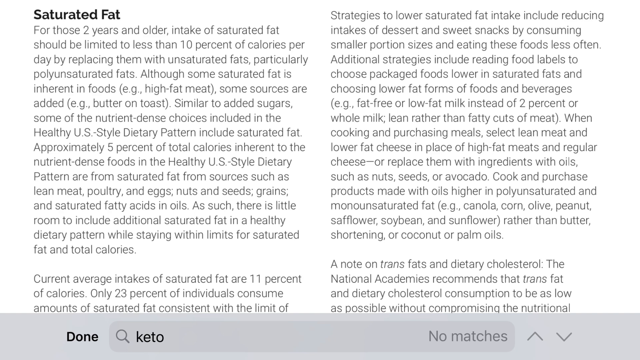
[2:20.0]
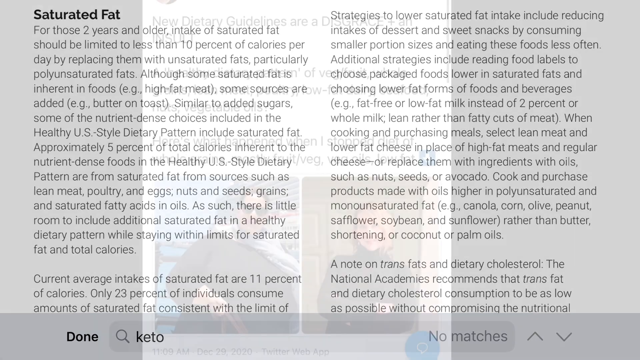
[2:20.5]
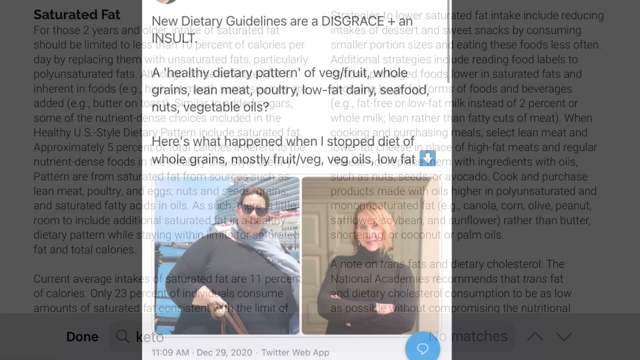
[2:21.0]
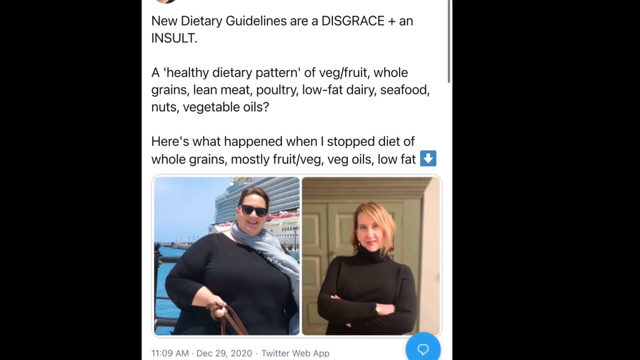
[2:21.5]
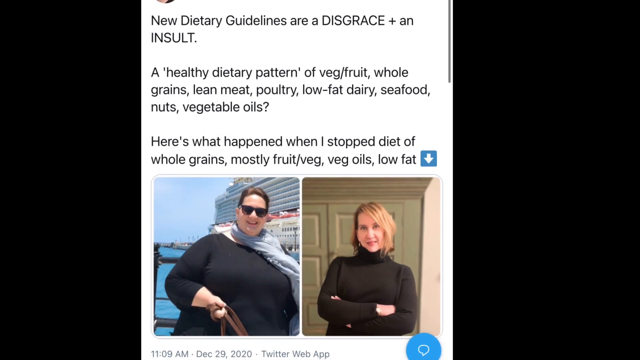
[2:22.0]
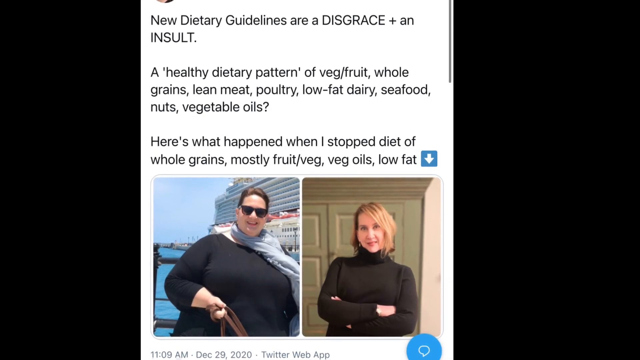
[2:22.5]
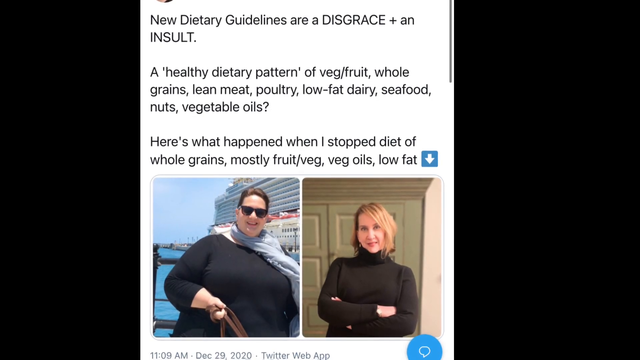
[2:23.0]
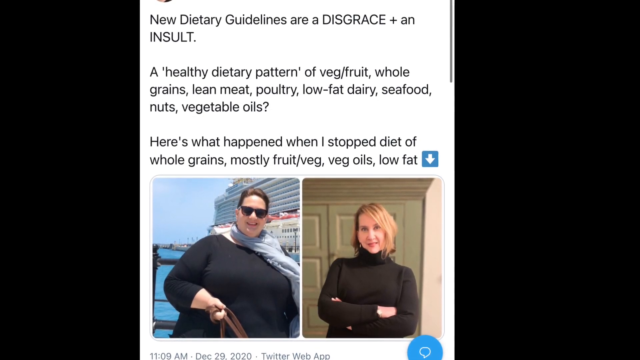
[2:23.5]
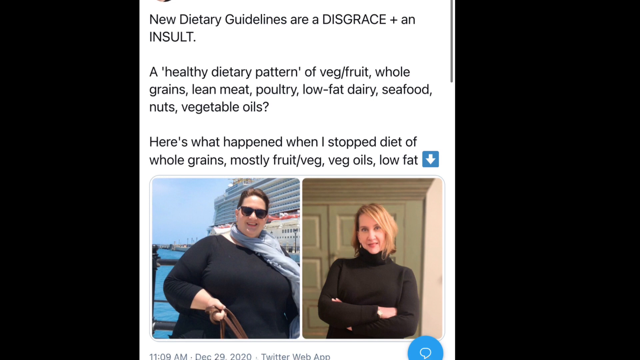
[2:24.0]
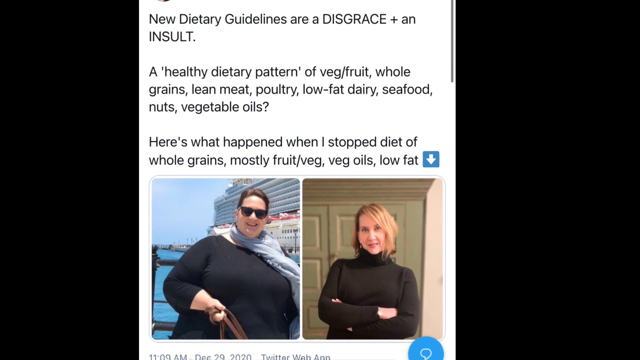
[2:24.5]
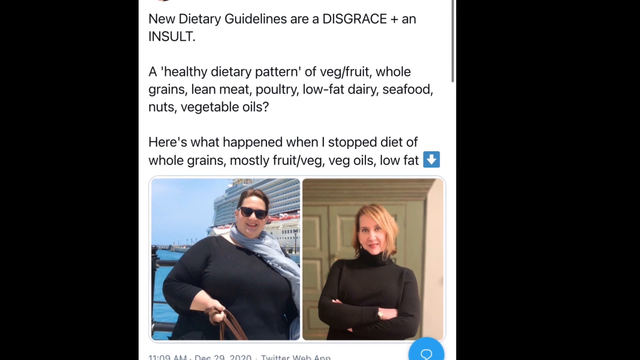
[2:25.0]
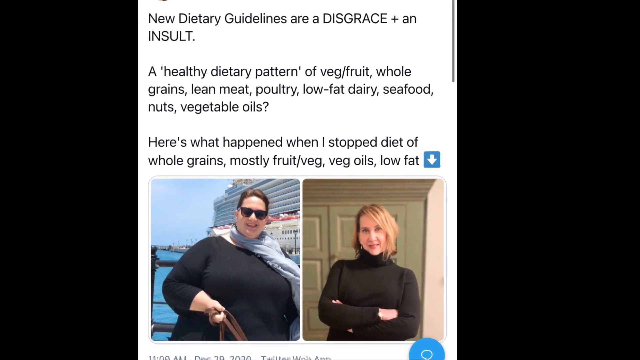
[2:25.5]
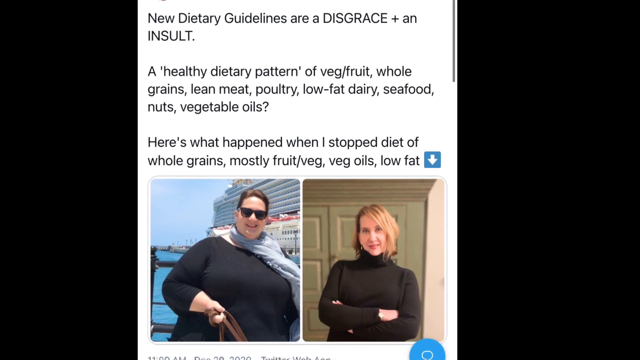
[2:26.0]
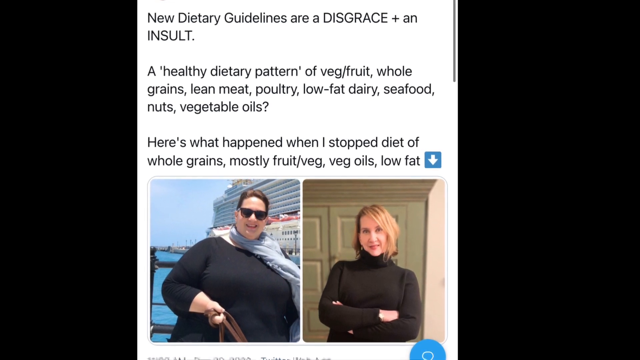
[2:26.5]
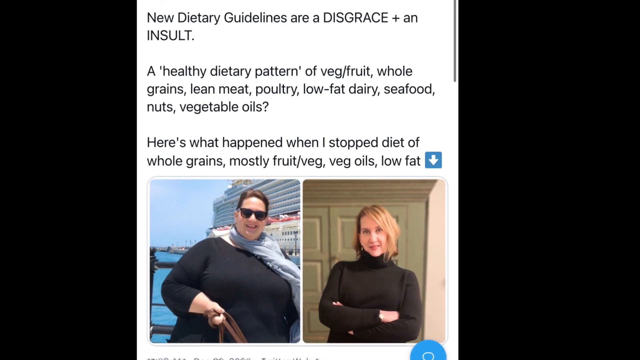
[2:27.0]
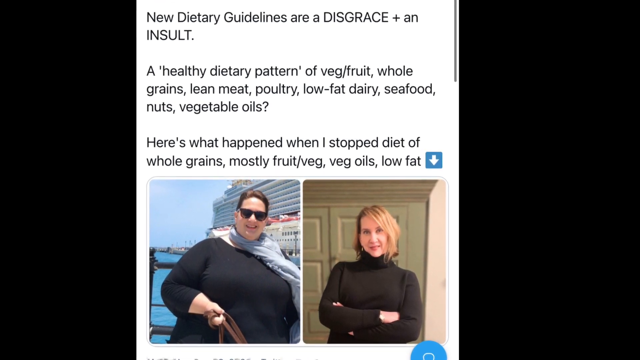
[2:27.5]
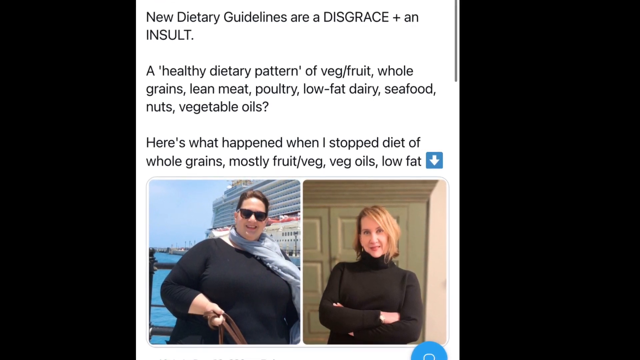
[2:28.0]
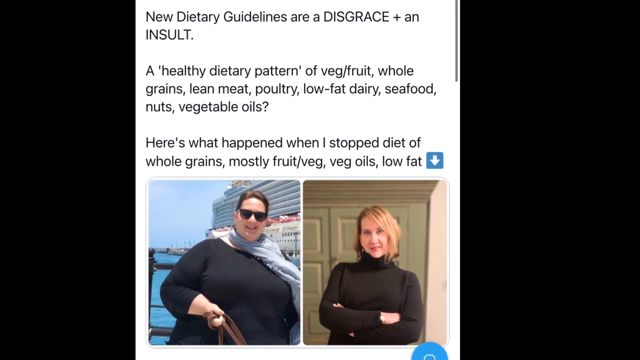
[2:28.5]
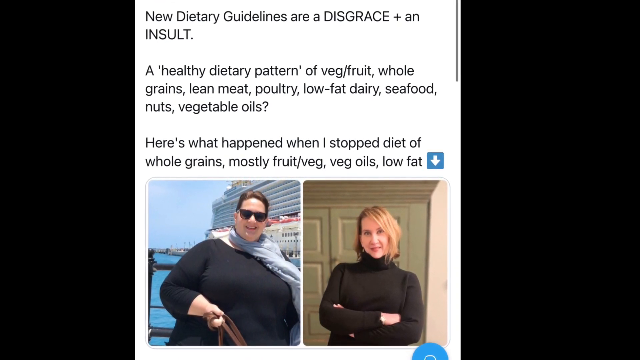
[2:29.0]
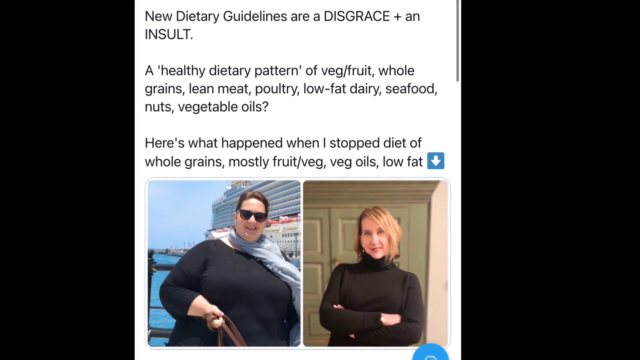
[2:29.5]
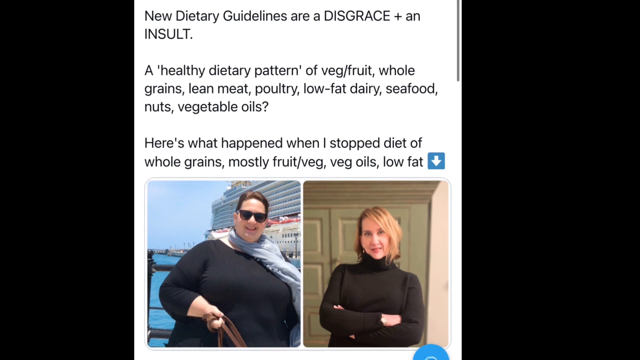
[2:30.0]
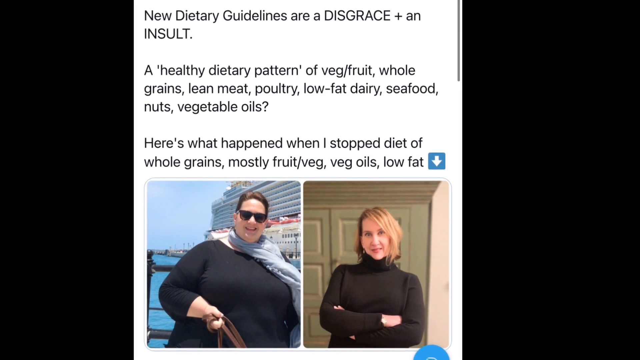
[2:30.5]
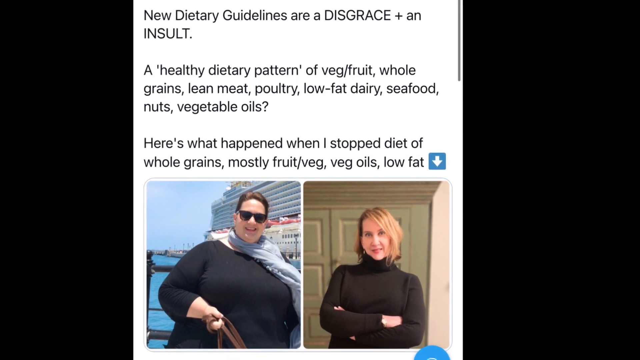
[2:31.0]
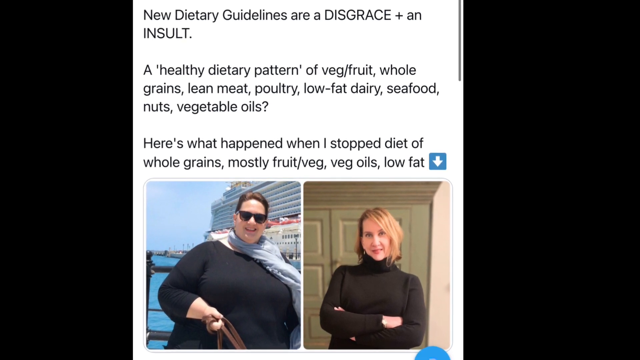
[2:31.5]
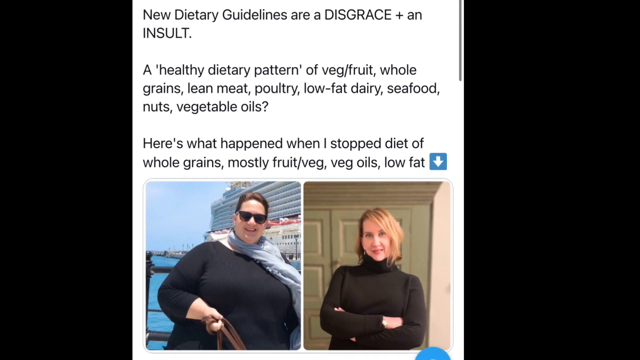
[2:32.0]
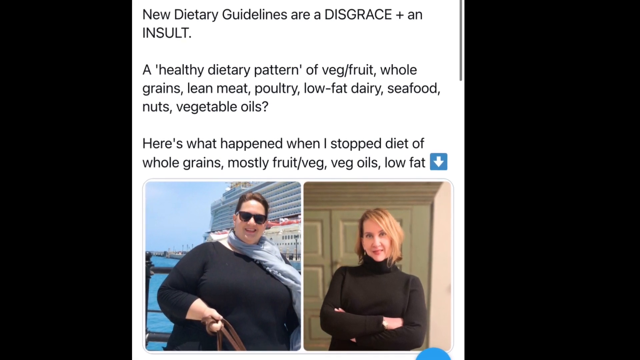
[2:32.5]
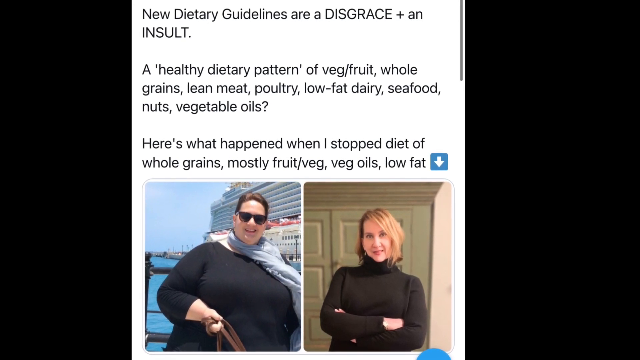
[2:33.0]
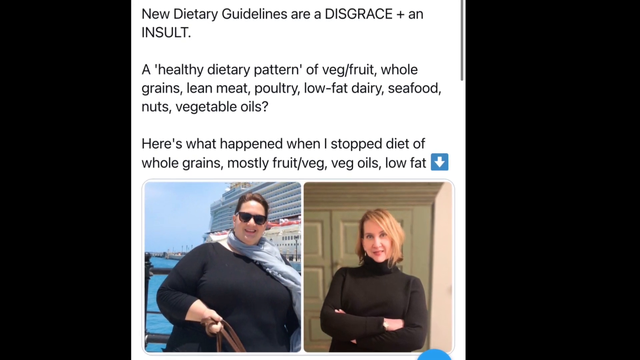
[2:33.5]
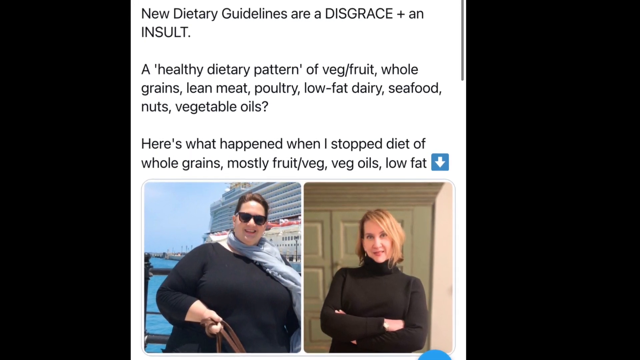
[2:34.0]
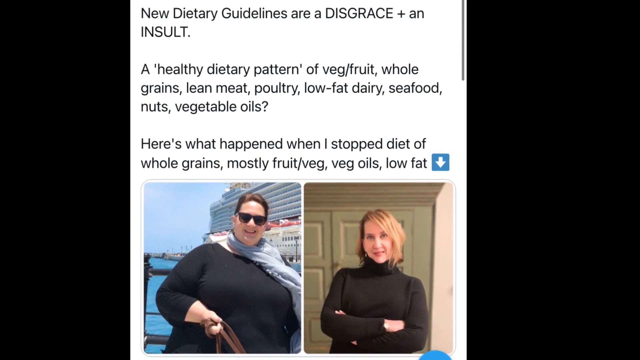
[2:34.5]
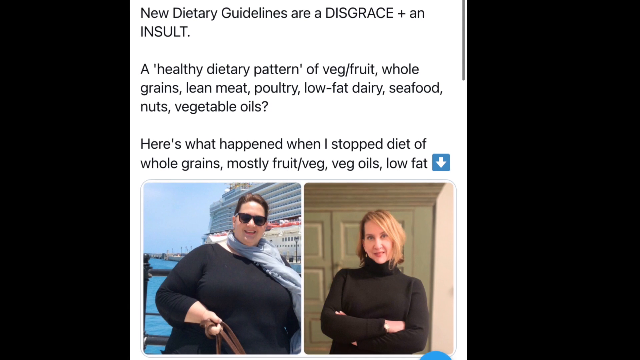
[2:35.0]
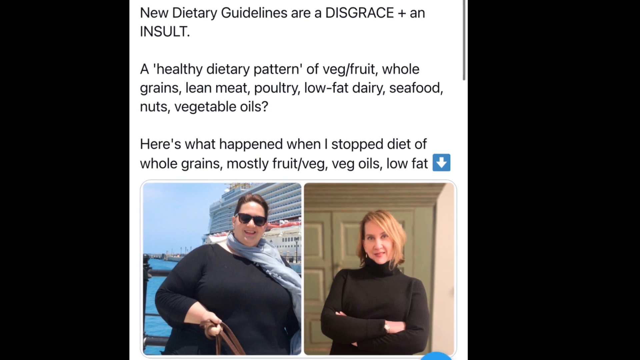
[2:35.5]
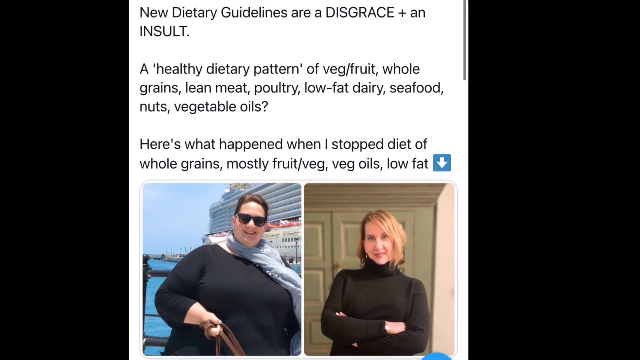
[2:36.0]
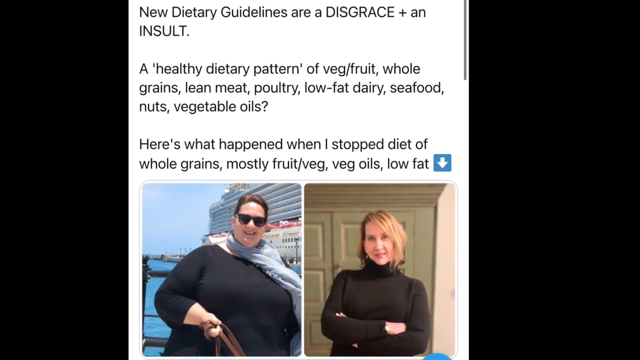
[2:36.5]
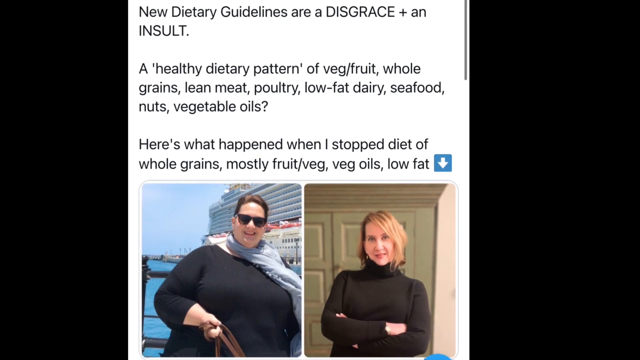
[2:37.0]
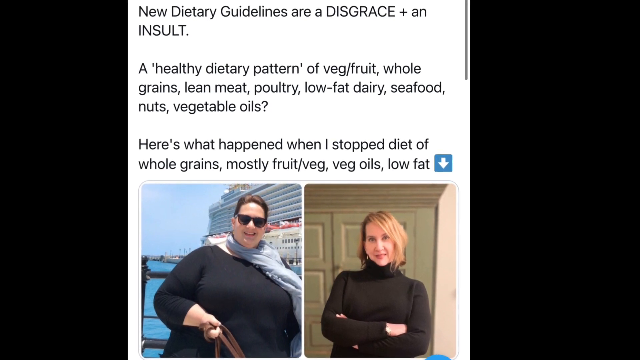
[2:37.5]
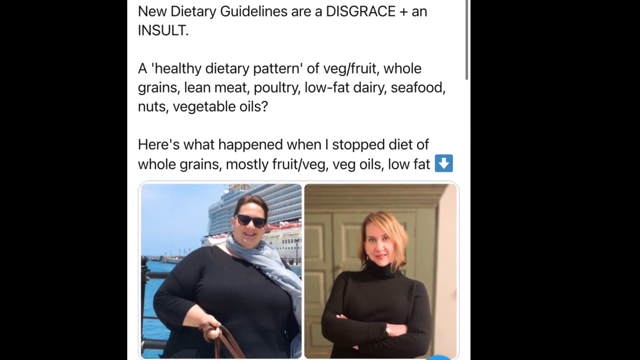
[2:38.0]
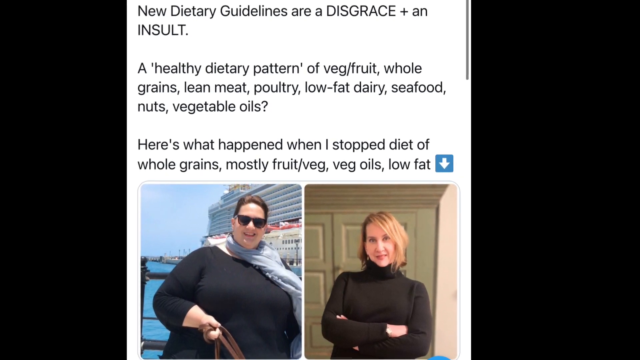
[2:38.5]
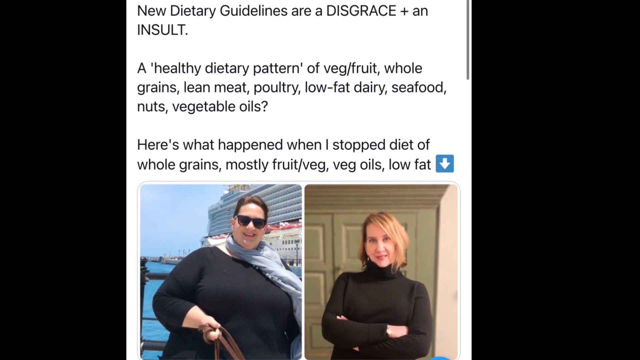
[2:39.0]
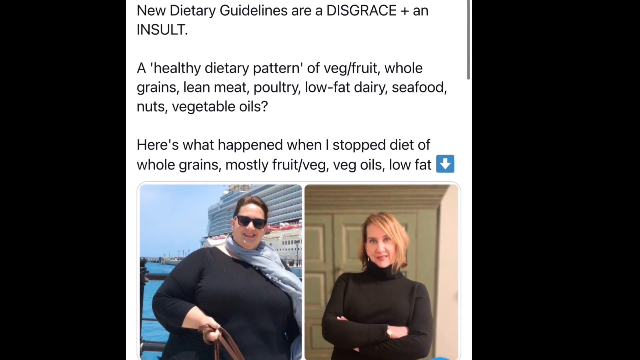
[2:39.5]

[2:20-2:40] Information on saturated fat suggests that for those two years and older, intake of saturated fat should be limited to less than 10% of calories per day by replacing it with unsaturated fats, particularly polyunsaturated fats. It notes that although some saturated fat is inherent in foods, for example high-fat meat, some sources are added, like butter on toast, and that, similar to added sugars, some of the nutrient-dense choices in the healthy US-style dietary pattern include saturated fat. More explanation follows, then information on strategies to lower saturated fat intake and a note on trans fat and dietary cholesterol at the end of the paragraphs. The video then shows what appears to be one woman's opinion of the new dietary guidelines, calling them "a disgrace" and "an insult," with the text "a healthy dietary pattern of vegetable, fruit, whole grains, lean meat, poultry, low-fat dairy, seafood, nuts, and vegetable oils" and "Here's what happened when I stopped the diet of whole grains, mostly fruit, veggie, vegetable oils, and low-fat." Pictures of her show her very heavy and overweight on the left, and on the right looking happier, arms crossed and much slimmer. Her opinion of the guidelines appears to be negative.